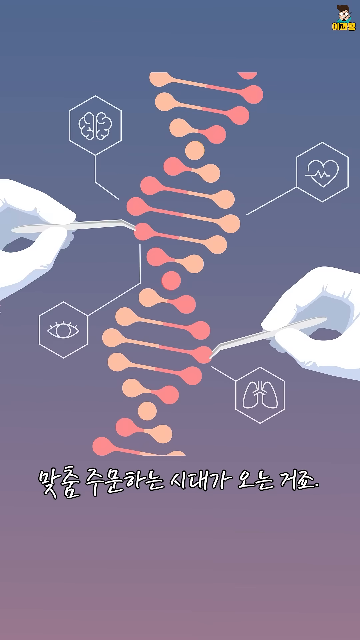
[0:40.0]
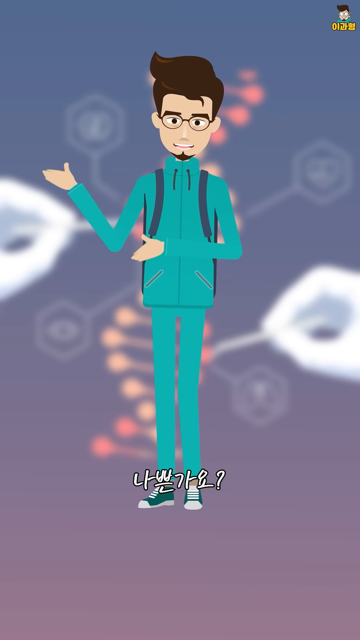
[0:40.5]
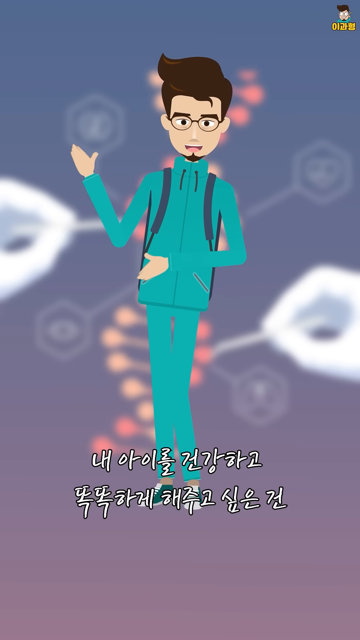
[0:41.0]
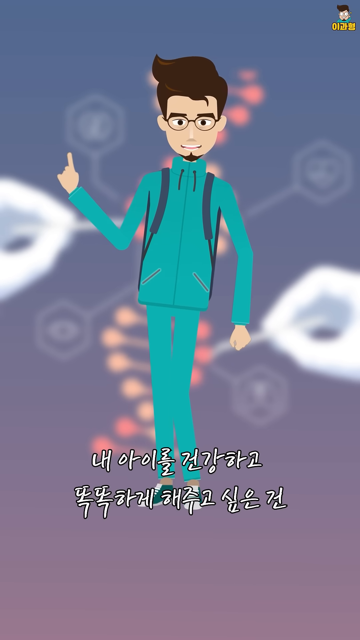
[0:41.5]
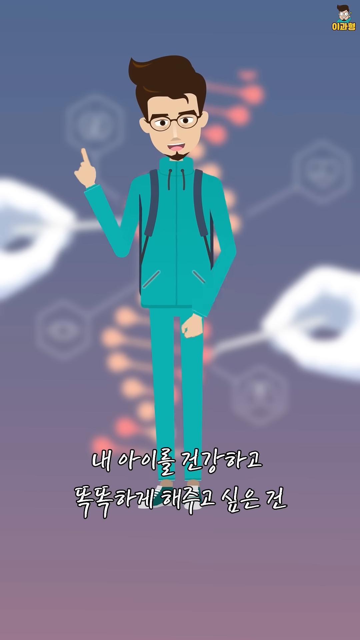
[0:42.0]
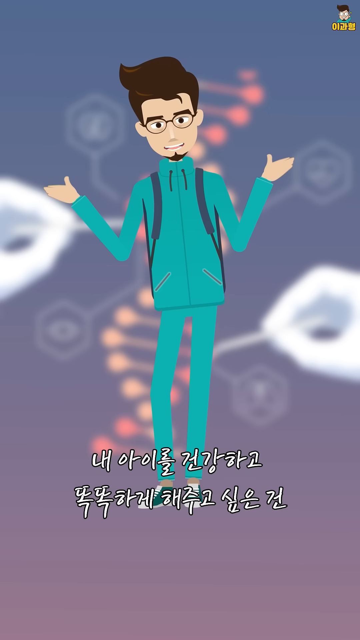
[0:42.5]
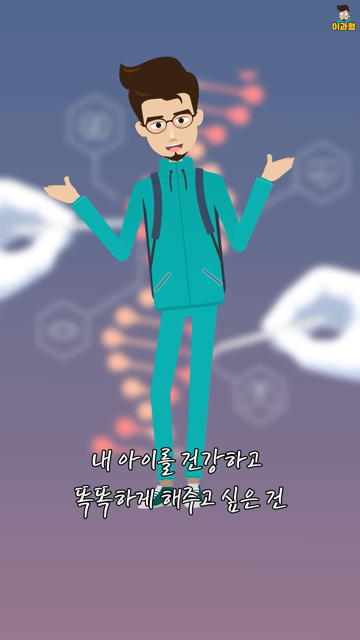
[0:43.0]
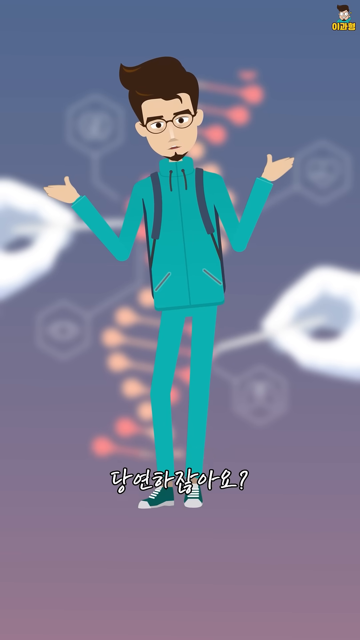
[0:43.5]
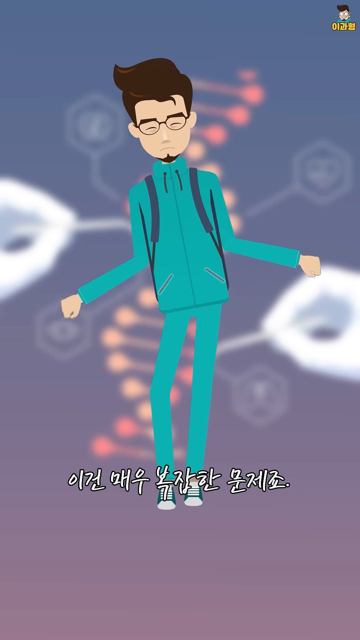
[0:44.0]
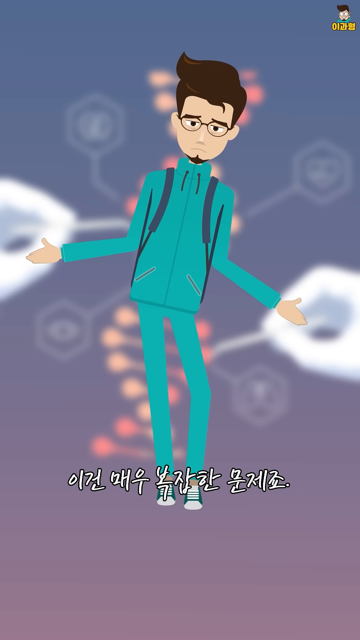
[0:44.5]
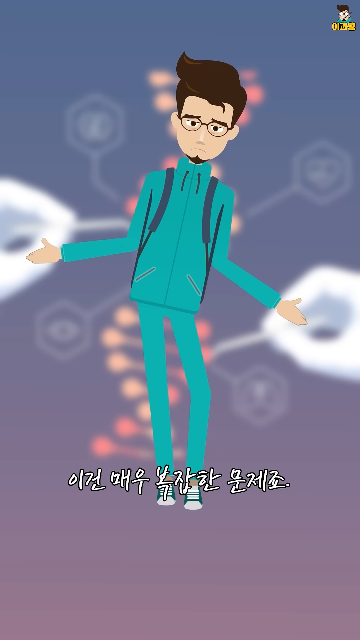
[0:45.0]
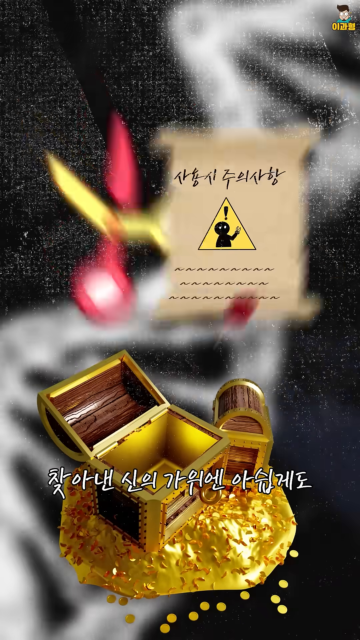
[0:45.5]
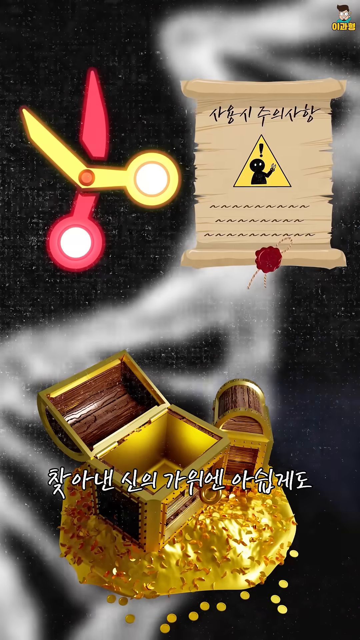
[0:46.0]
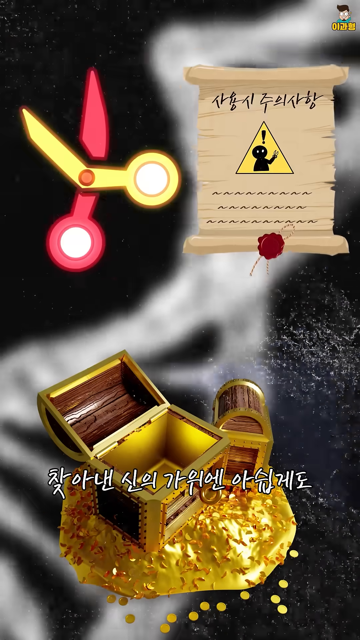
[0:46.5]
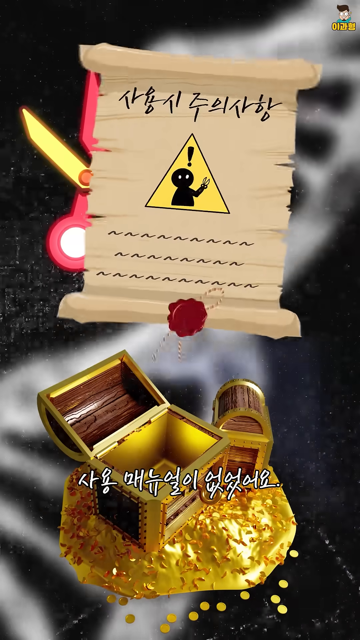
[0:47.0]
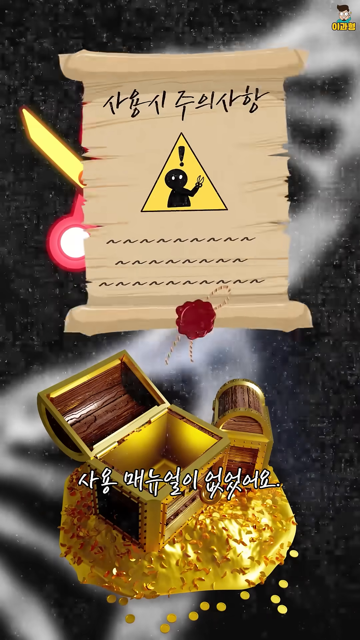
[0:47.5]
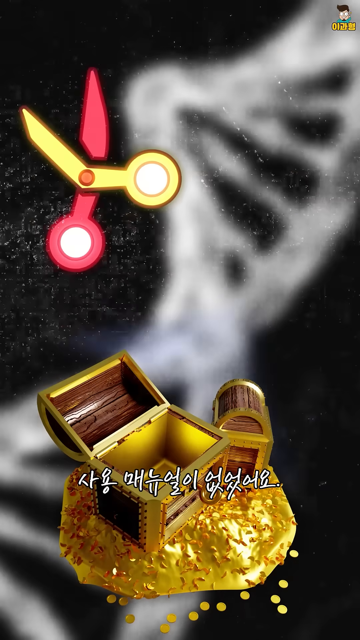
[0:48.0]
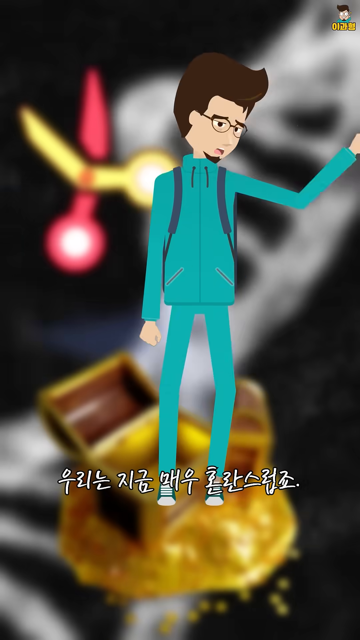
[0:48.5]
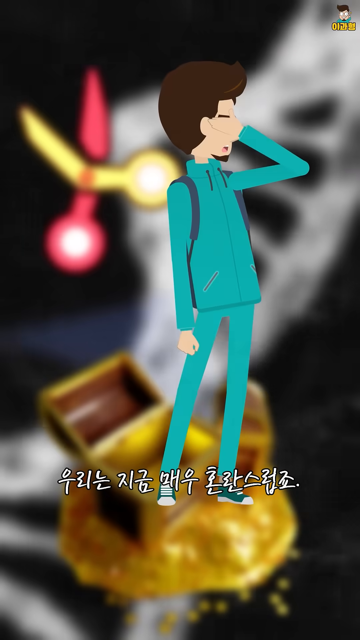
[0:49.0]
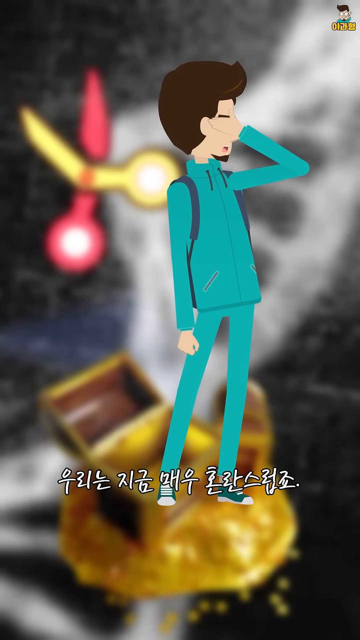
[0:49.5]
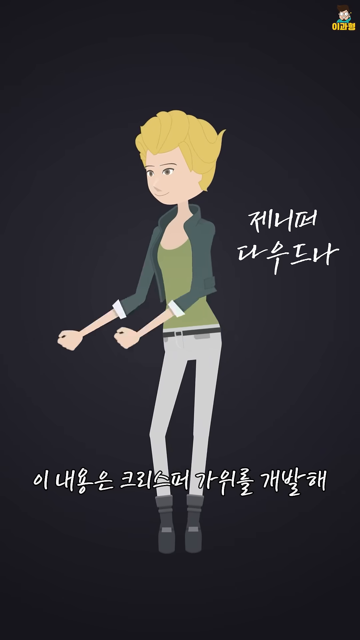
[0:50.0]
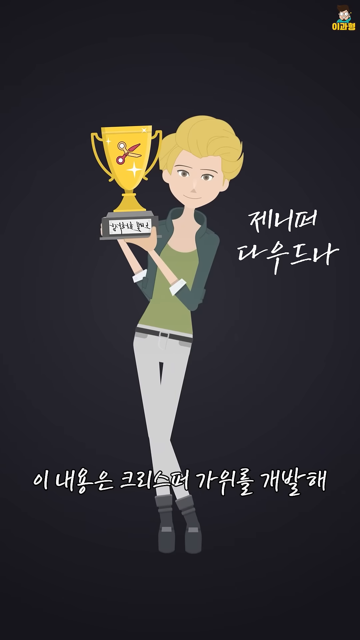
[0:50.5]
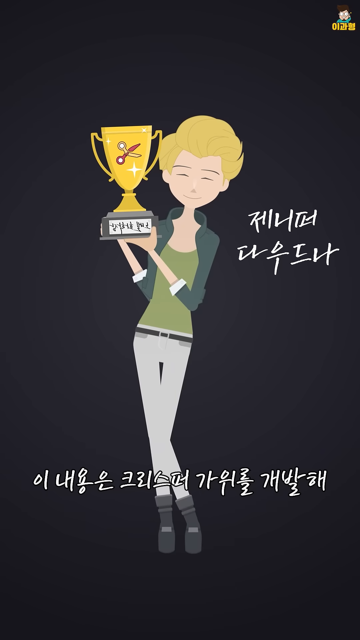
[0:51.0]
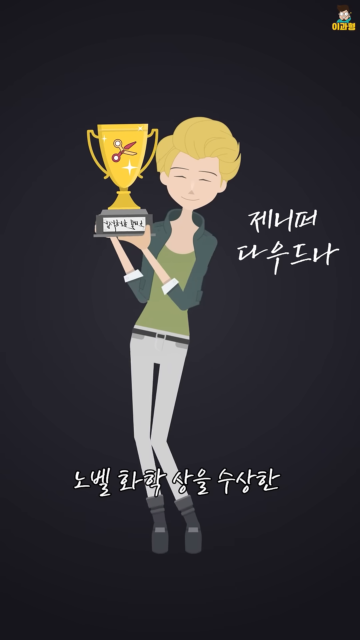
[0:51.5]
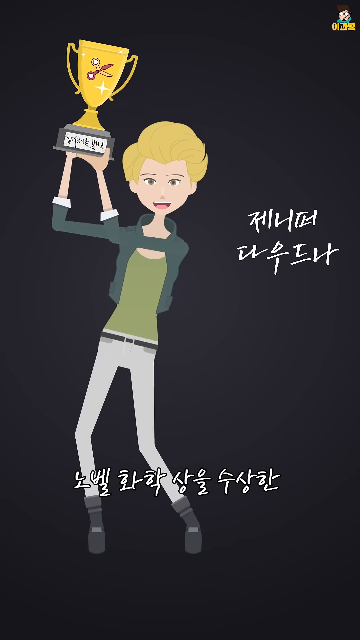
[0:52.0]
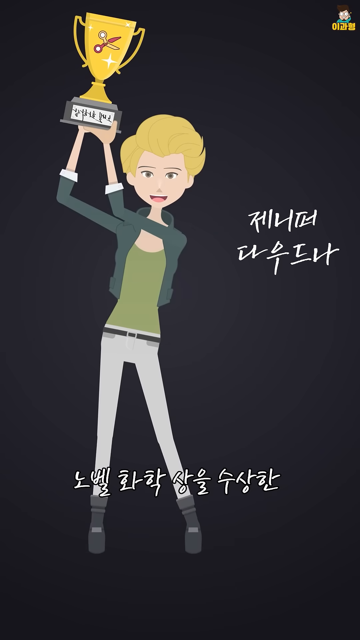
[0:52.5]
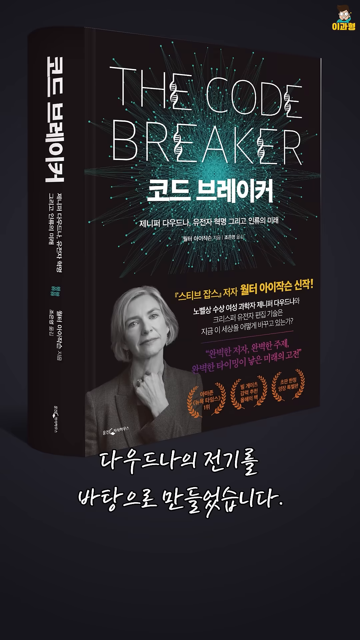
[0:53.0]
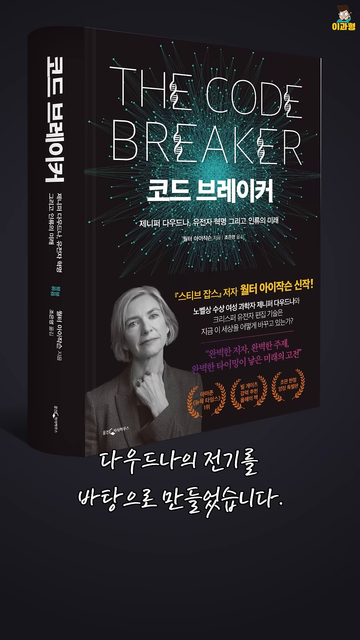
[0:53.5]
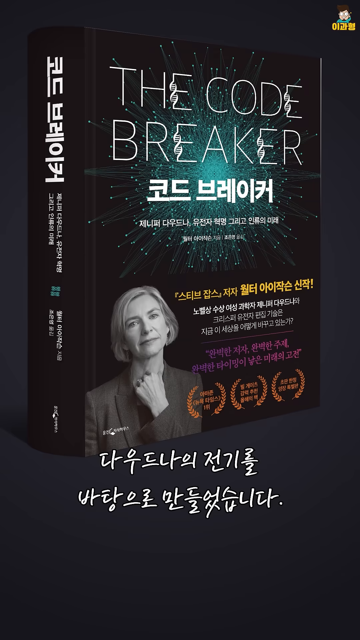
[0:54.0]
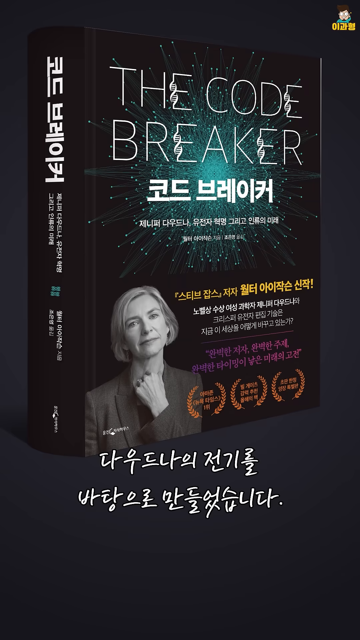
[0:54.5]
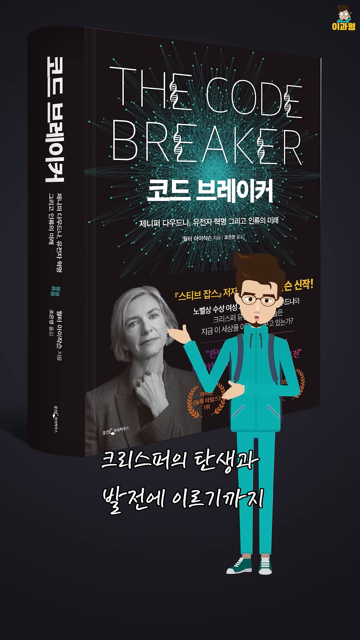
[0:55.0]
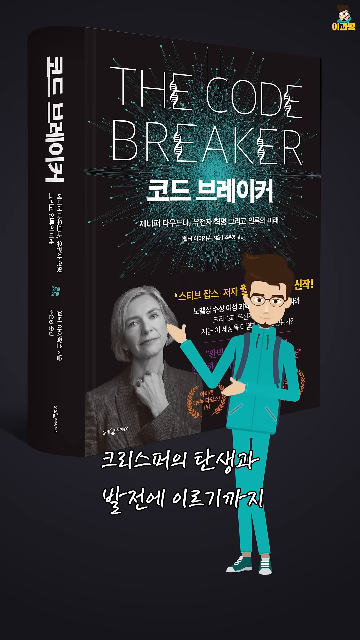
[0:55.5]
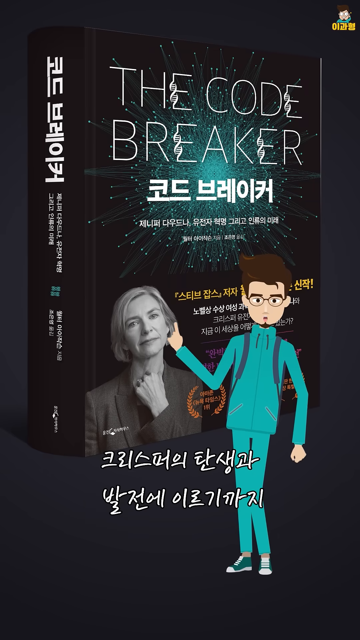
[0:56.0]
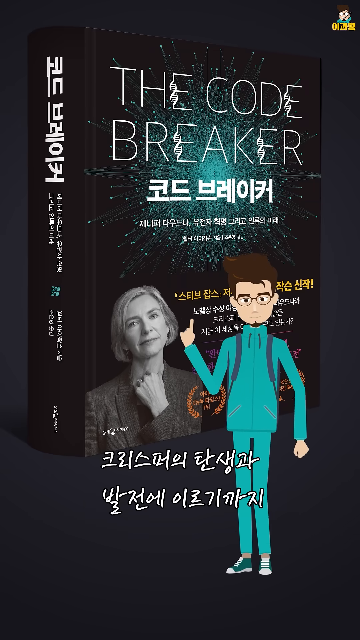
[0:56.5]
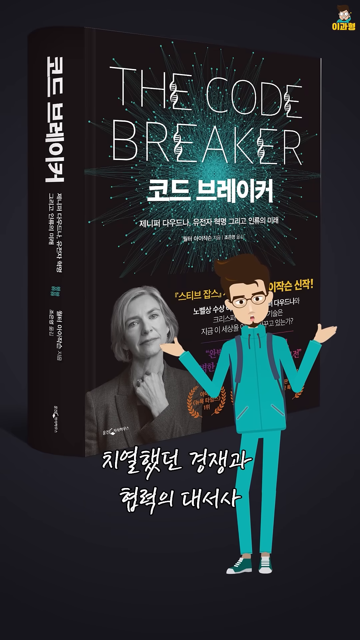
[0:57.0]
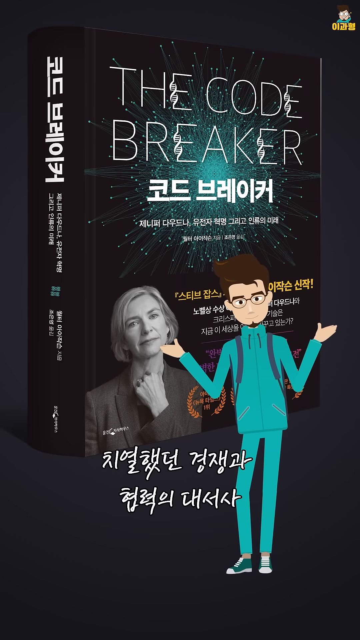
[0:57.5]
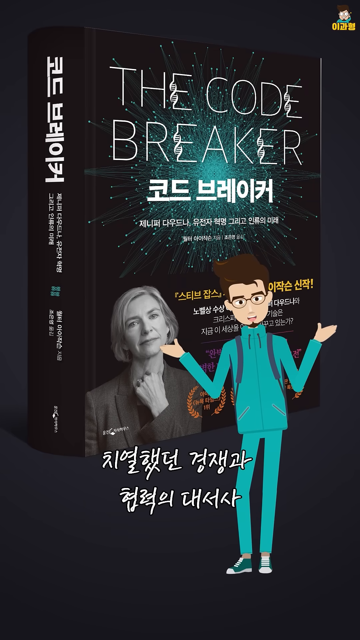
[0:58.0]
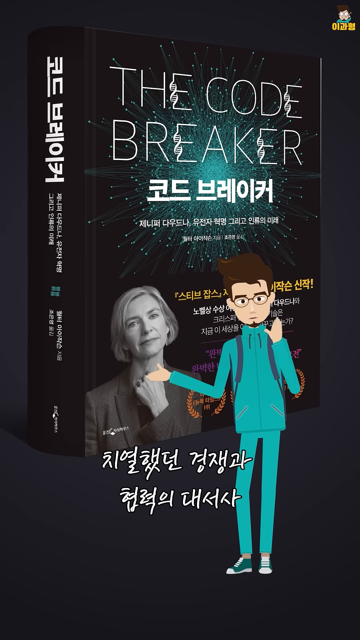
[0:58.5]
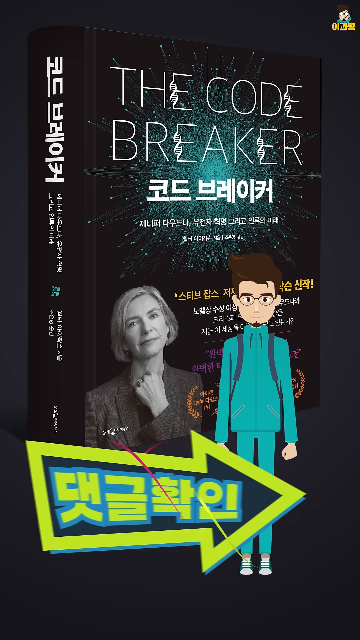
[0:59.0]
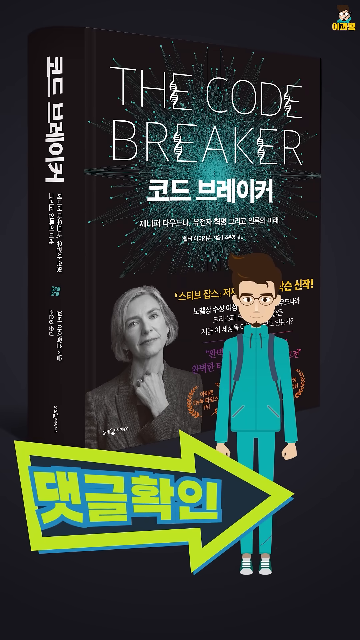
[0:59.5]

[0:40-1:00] An illustration shows a man in a green shirt and green pants, apparently with a blue backpack on. He has brown glasses and brown hair and talks to the camera. A DNA strip is in the background. He then appears on top of another illustration containing scissors and what looks like a treasure chest and a treasure scroll. The video moves to an illustration of a woman, and then to a book that says "The Code Breaker". The video ends with him saying "check out the epic comments" and talking about the book.